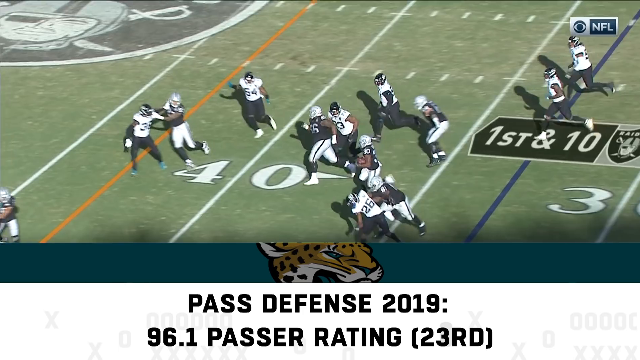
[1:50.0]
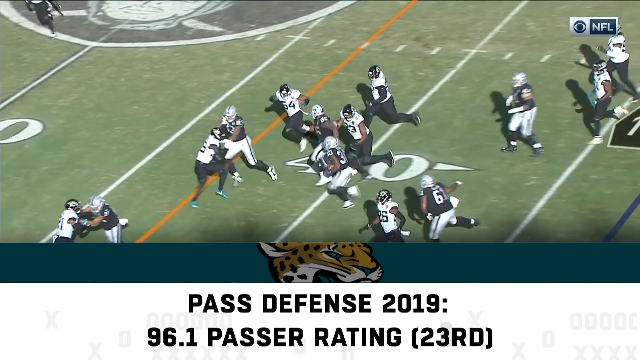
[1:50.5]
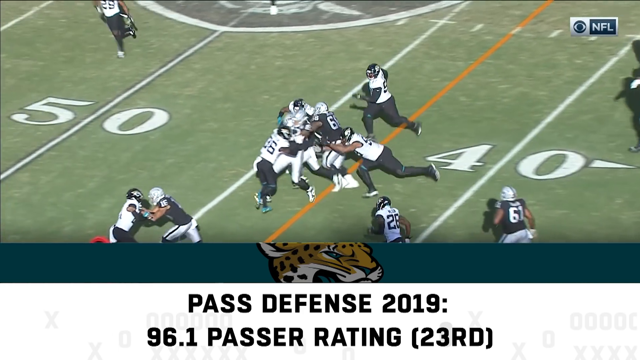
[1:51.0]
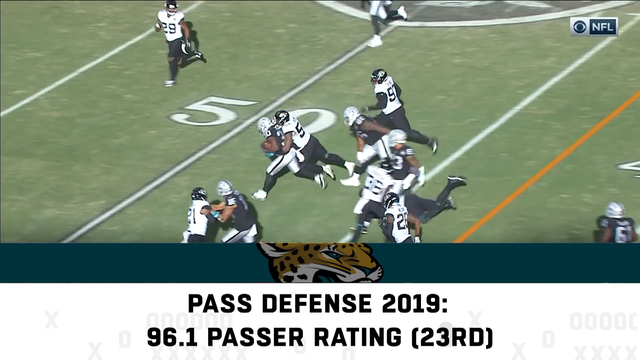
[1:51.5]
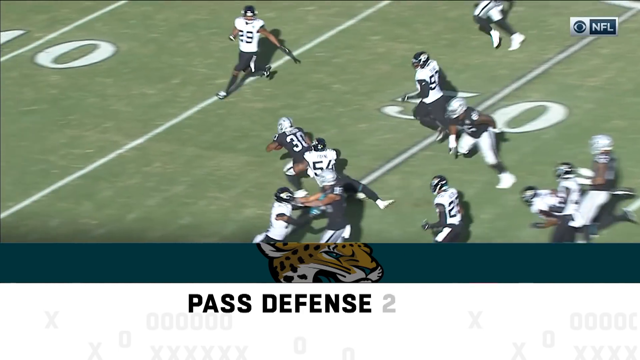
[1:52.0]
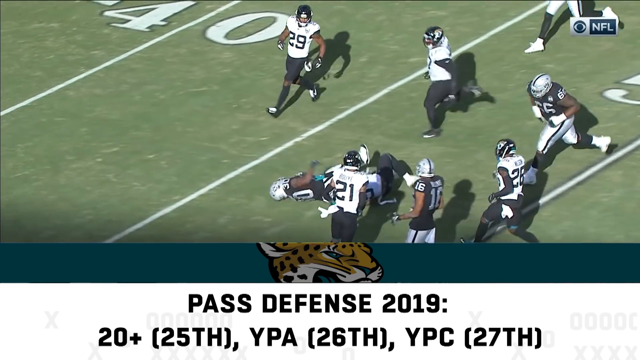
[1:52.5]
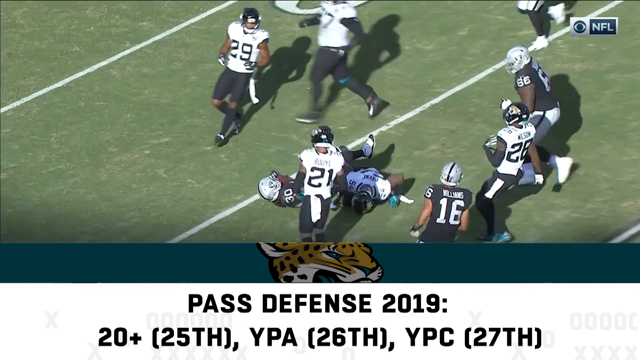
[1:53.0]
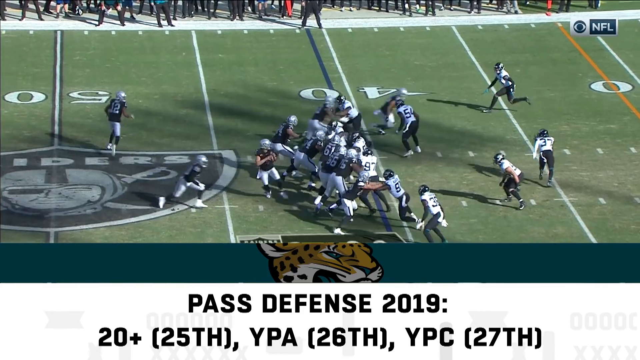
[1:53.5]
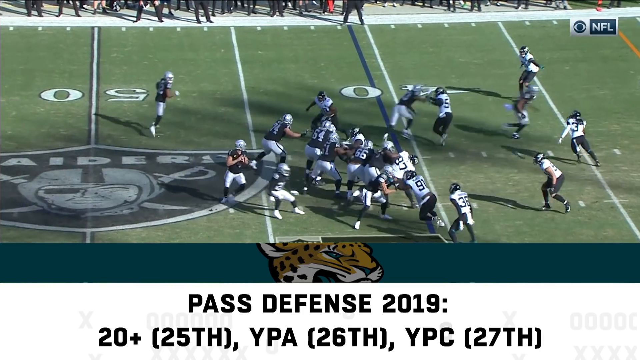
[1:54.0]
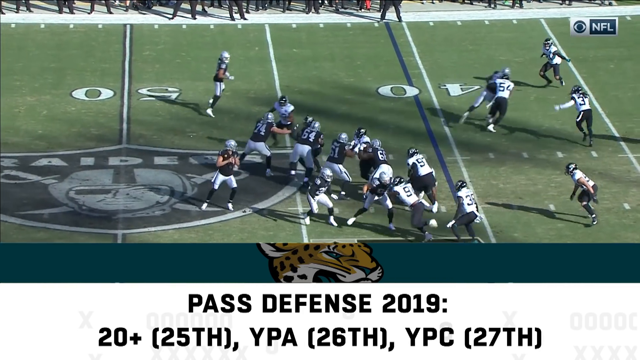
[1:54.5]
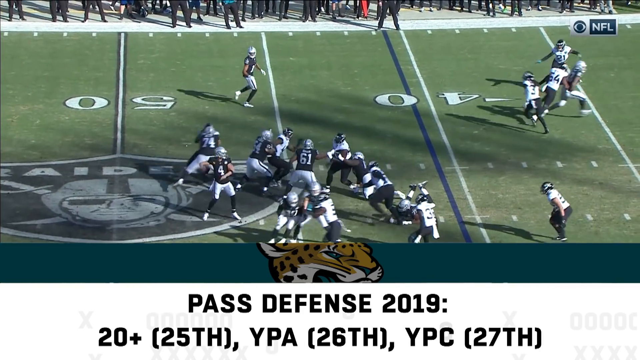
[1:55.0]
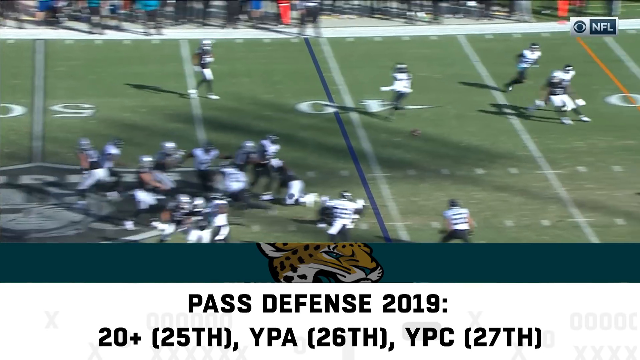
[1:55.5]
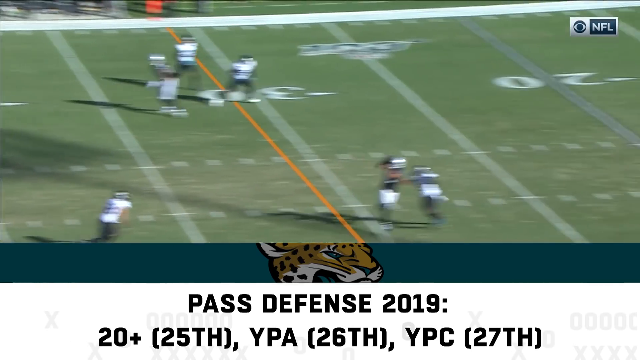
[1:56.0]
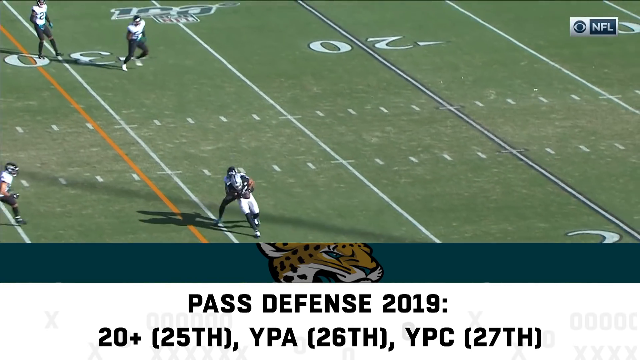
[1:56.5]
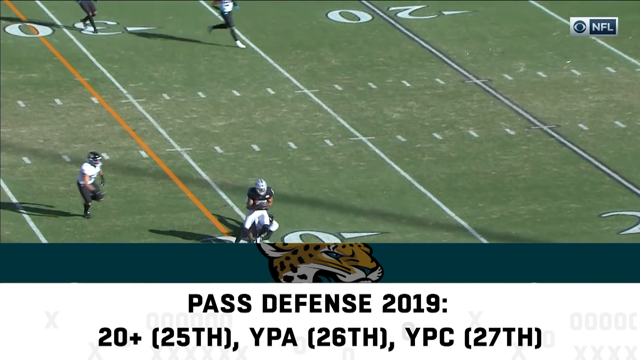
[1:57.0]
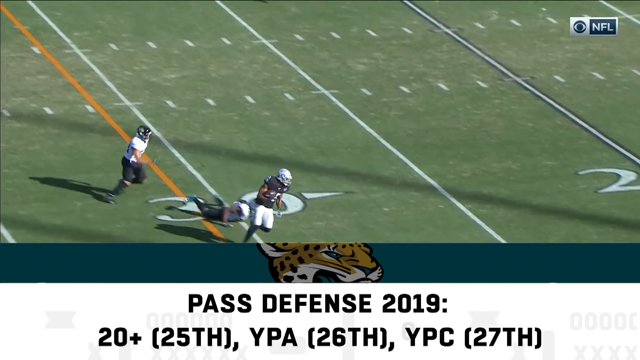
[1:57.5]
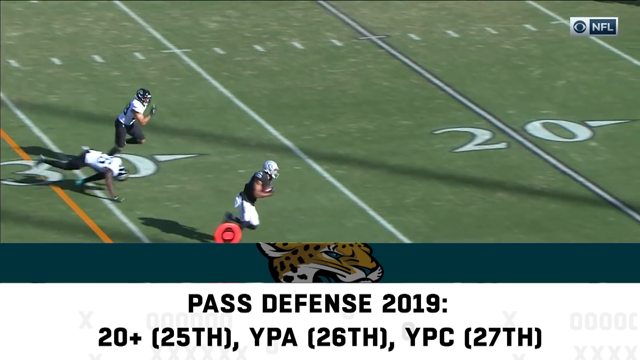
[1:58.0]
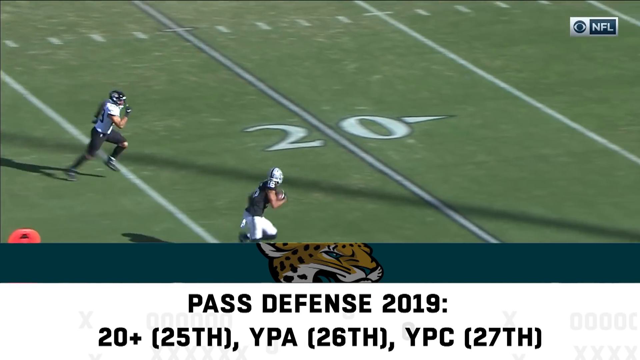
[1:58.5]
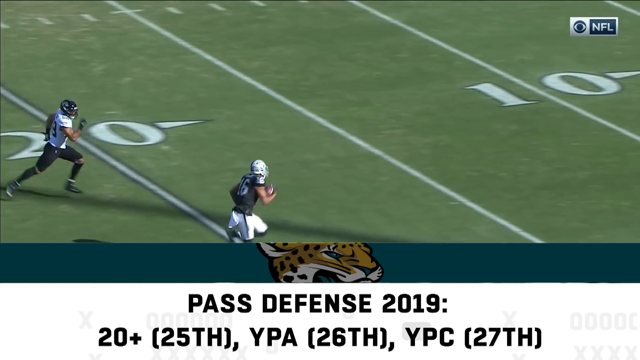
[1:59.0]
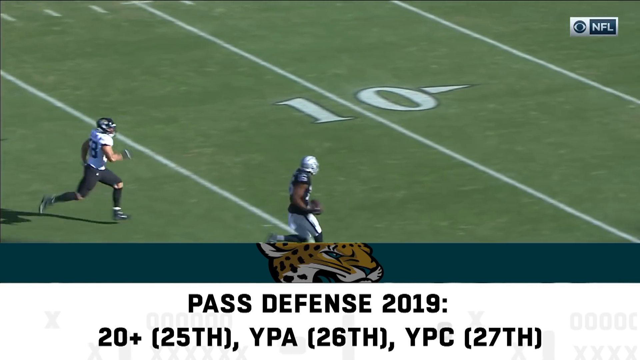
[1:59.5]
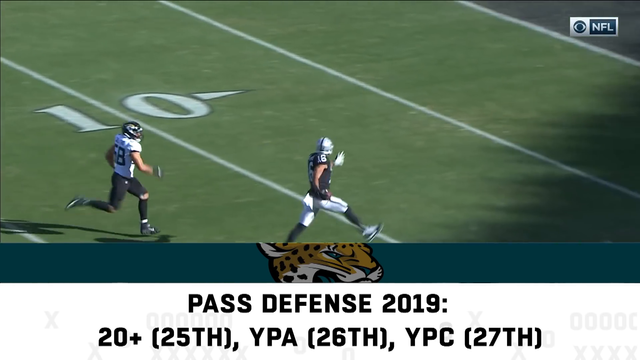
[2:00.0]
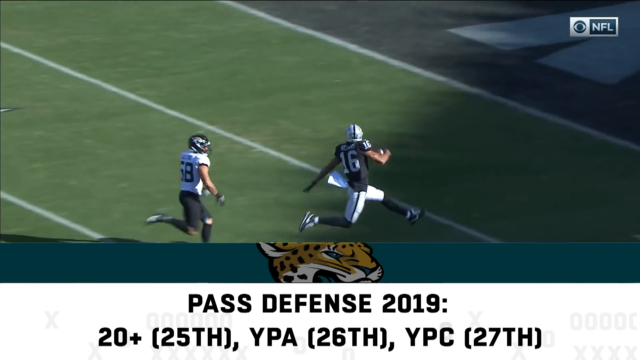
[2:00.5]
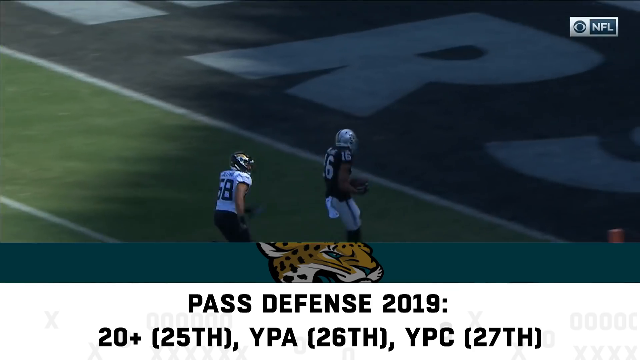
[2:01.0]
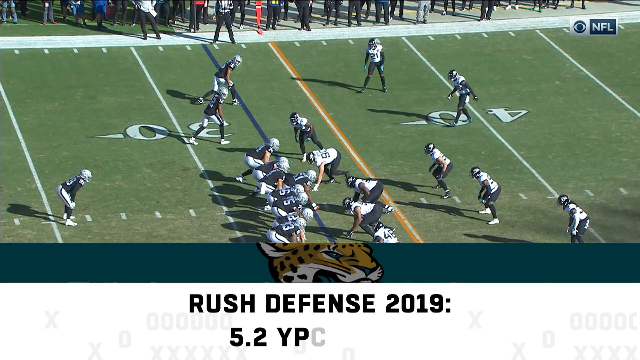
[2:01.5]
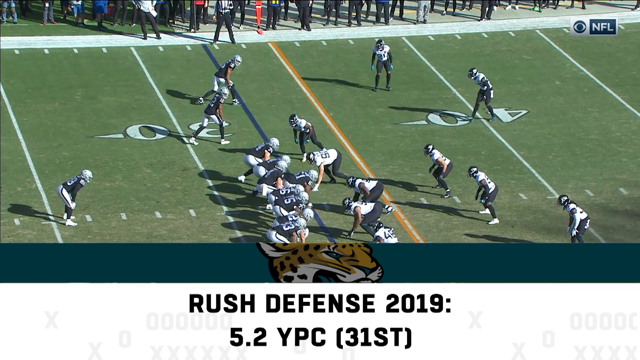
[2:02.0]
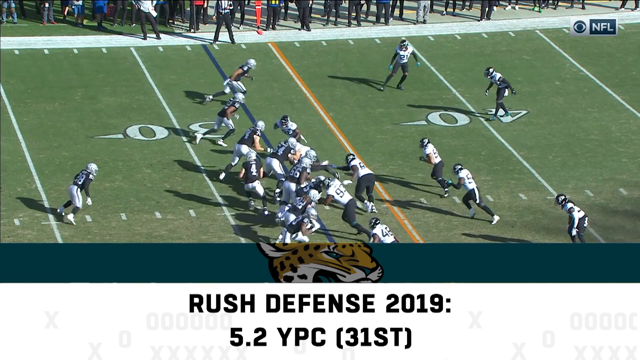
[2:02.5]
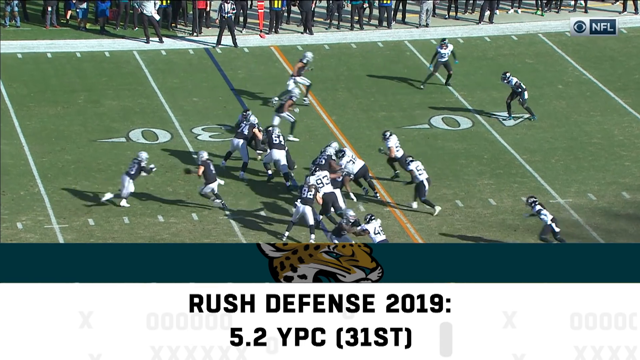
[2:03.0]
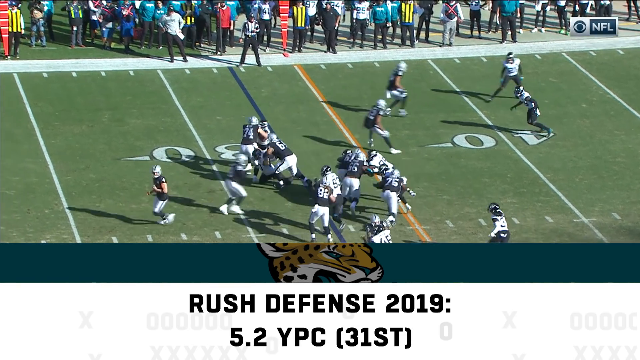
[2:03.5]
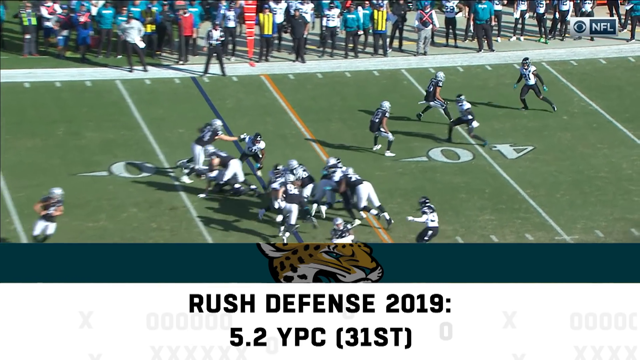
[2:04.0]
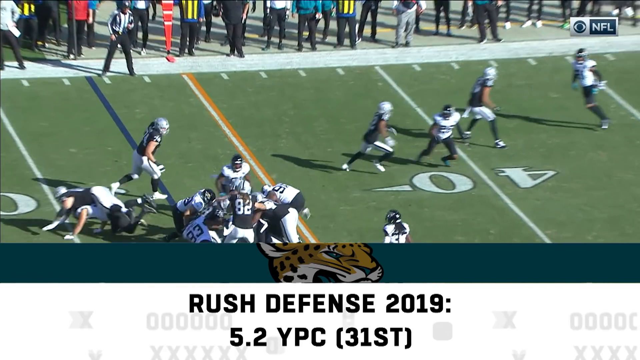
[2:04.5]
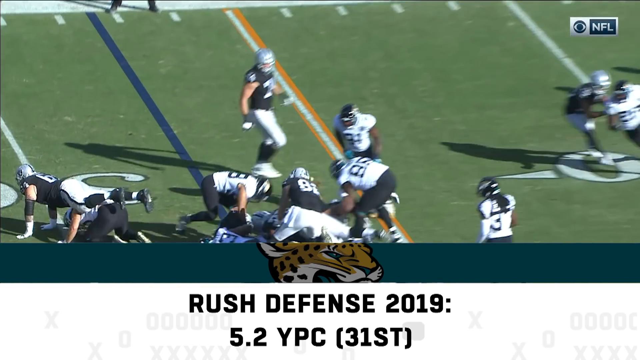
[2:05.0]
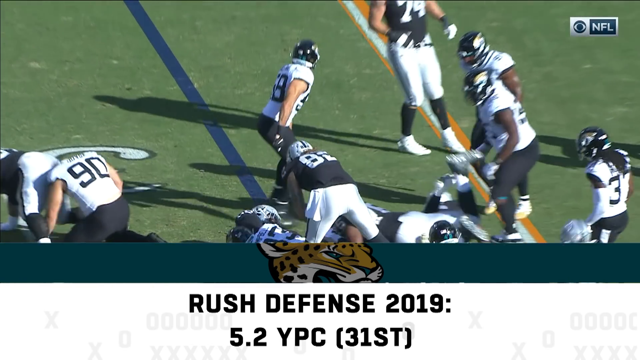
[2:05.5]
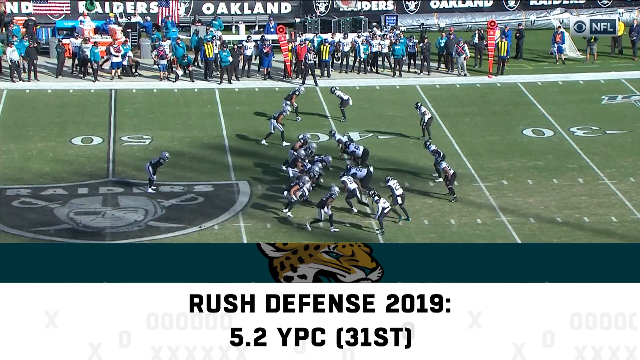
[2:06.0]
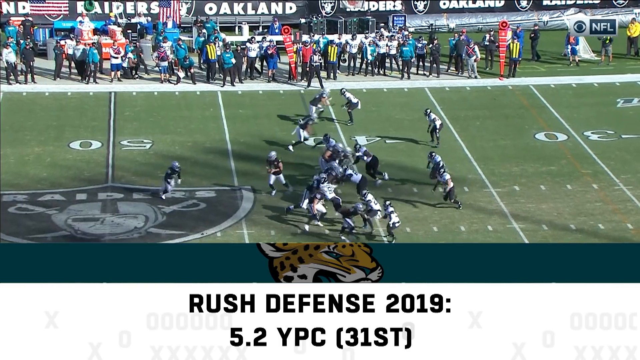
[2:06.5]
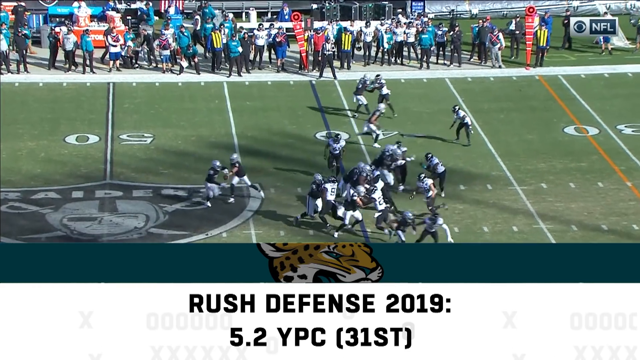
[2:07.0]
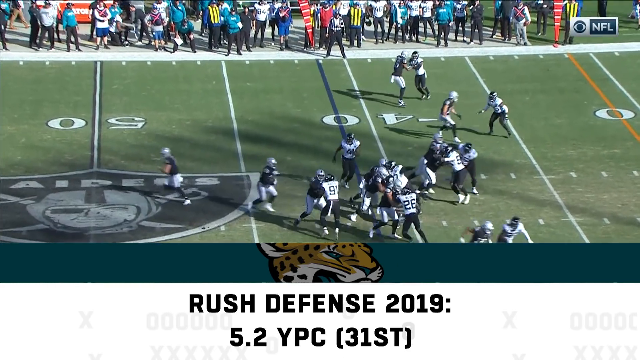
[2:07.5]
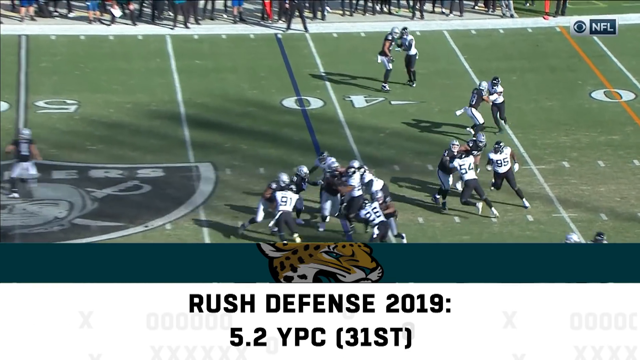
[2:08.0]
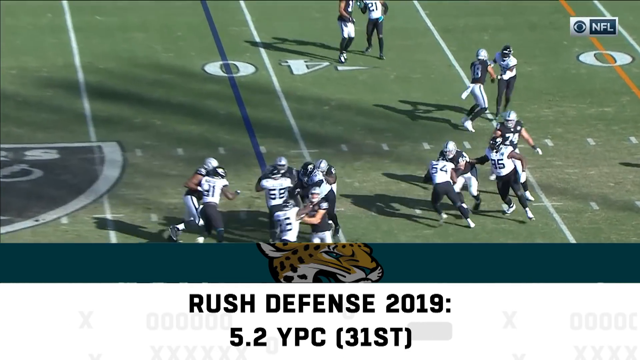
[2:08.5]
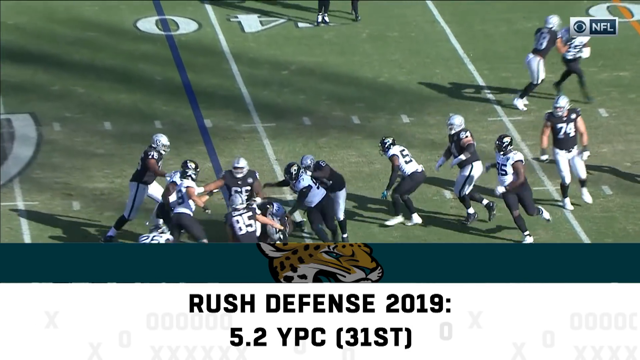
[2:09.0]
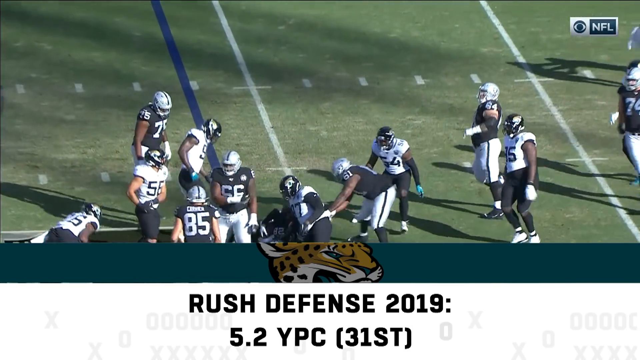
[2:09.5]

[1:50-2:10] The Oakland Raiders player who caught the short pass advances downfield, breaking a couple of tackles. The Oakland quarterback then passes to a player who immediately gets a first down, breaks a tackle, gets into open field and runs it in for a touchdown. Next, the ball is handed off to the Oakland running back, who plows straight downfield. Oakland run the ball again; the running back tries to swing right and is tackled heavily. The game is played in quite bright sunshine.